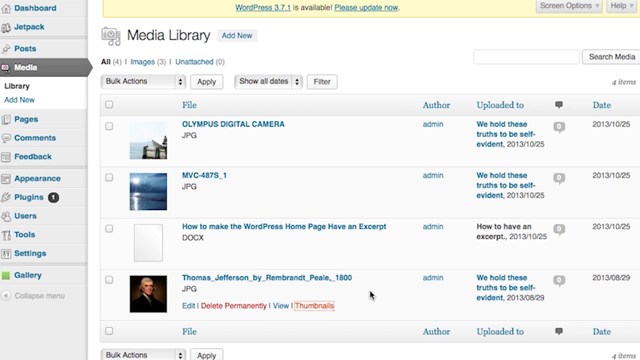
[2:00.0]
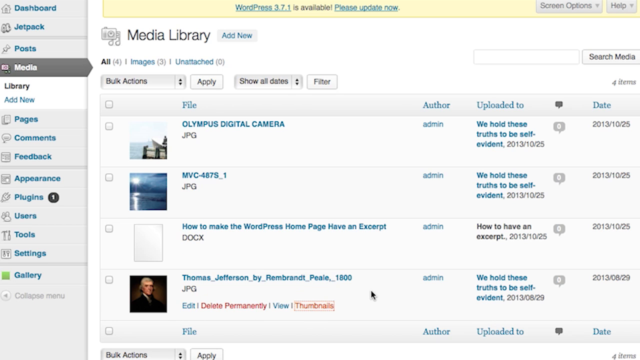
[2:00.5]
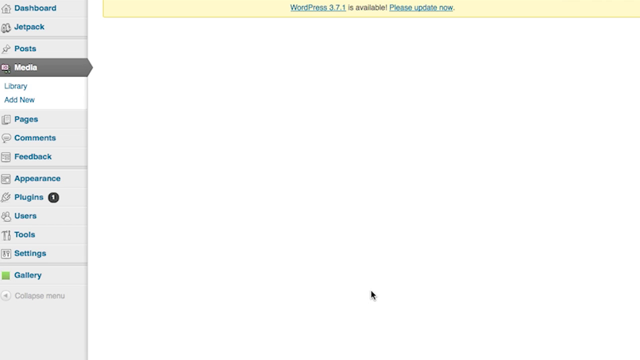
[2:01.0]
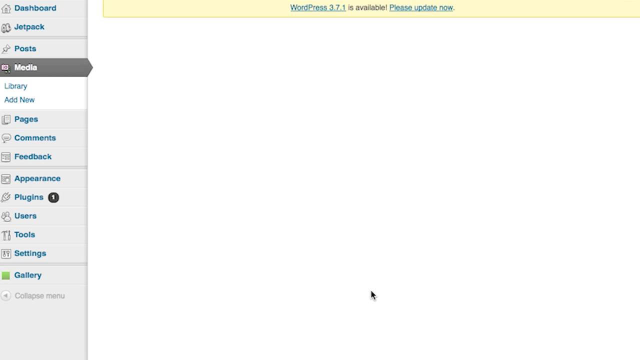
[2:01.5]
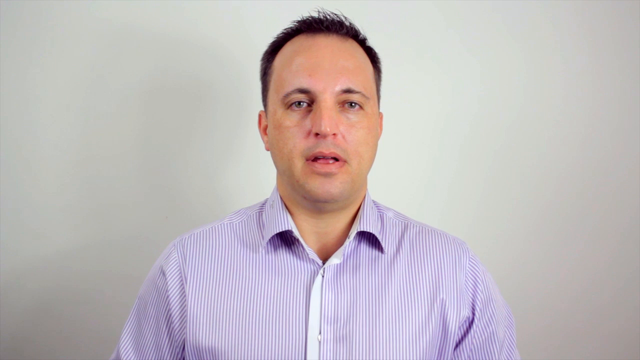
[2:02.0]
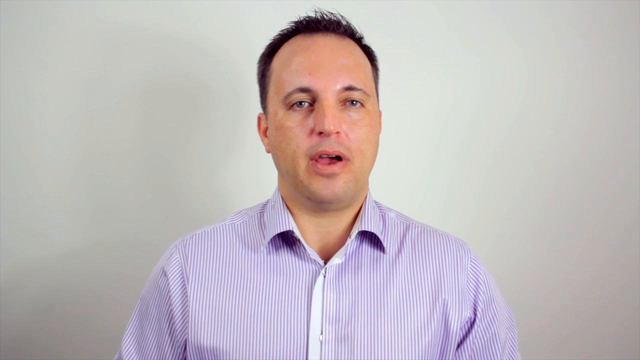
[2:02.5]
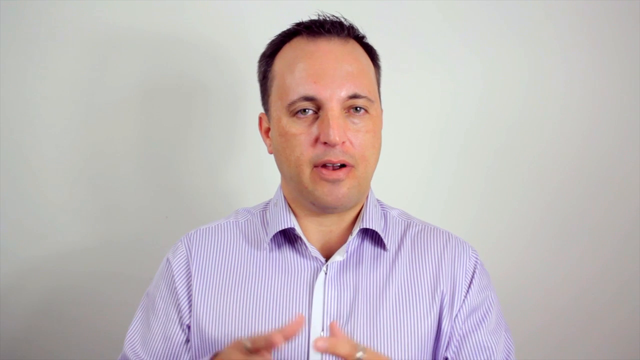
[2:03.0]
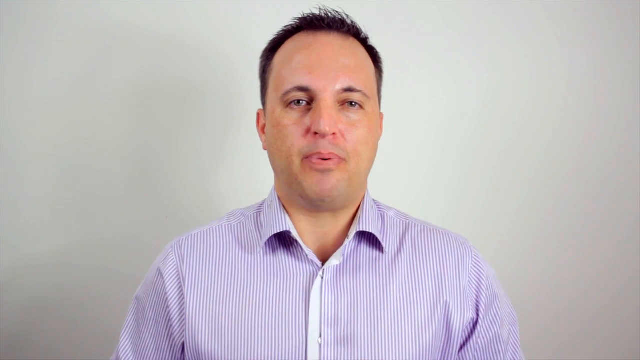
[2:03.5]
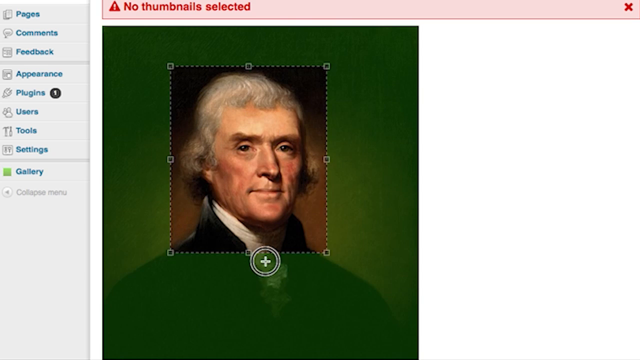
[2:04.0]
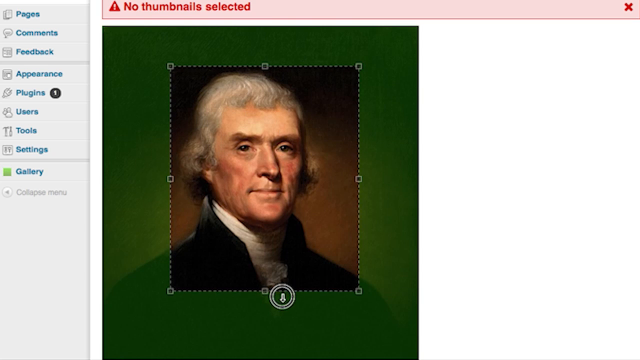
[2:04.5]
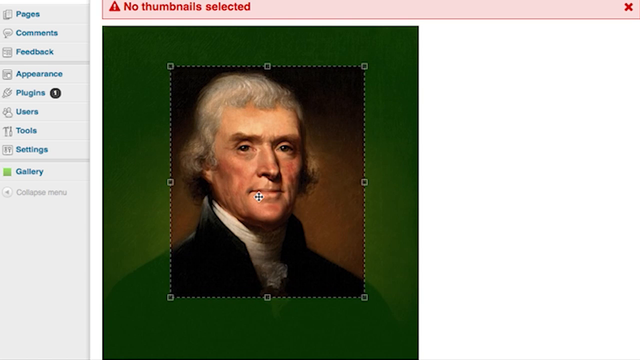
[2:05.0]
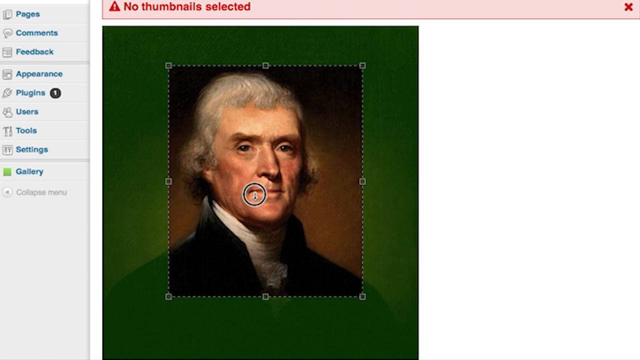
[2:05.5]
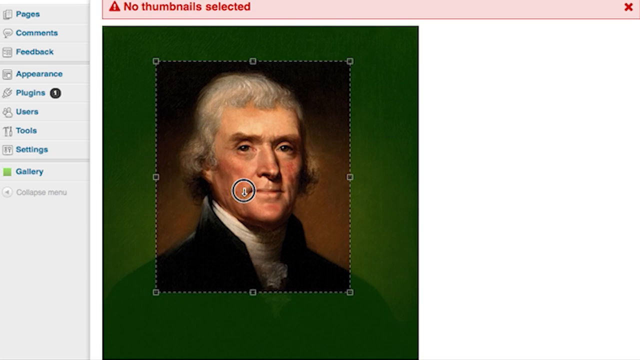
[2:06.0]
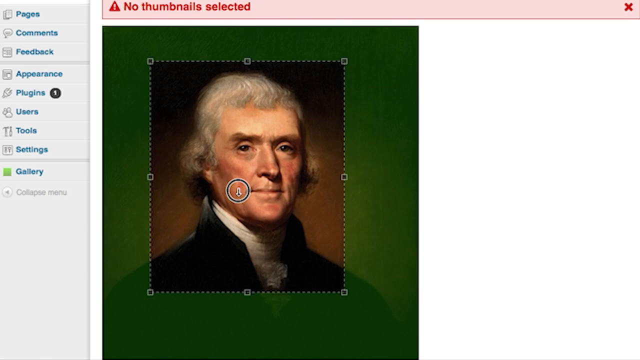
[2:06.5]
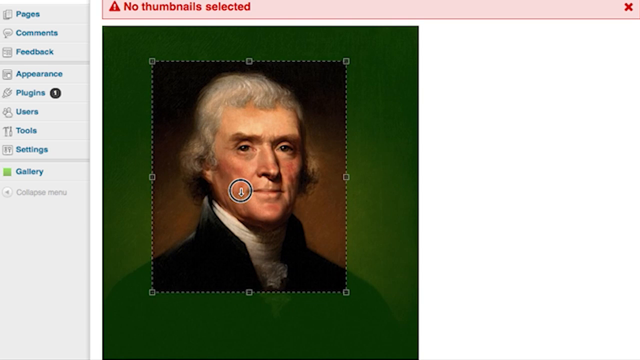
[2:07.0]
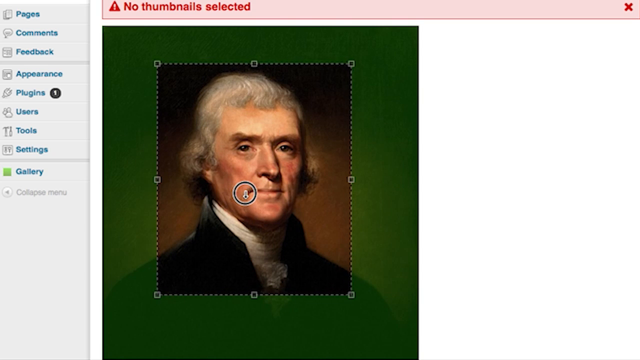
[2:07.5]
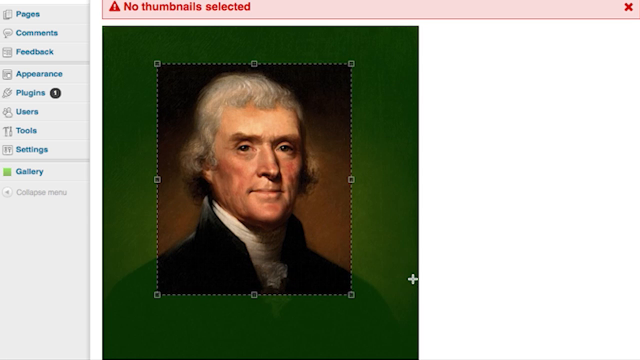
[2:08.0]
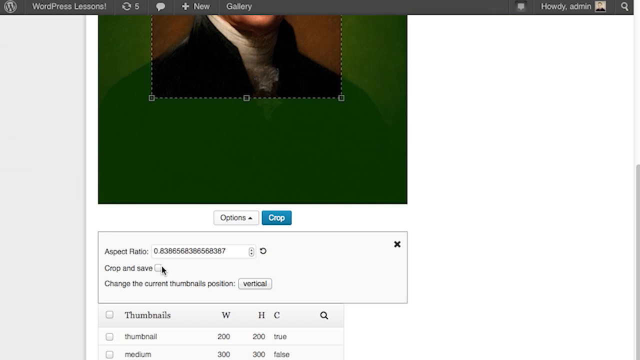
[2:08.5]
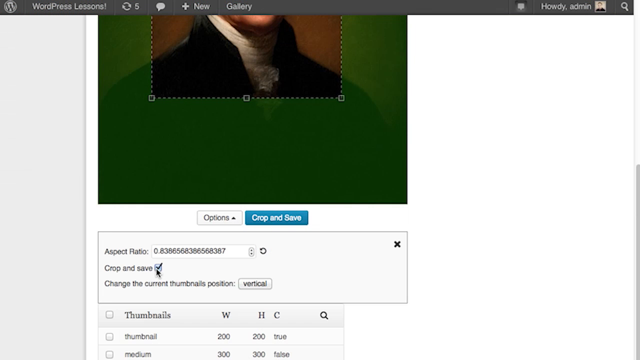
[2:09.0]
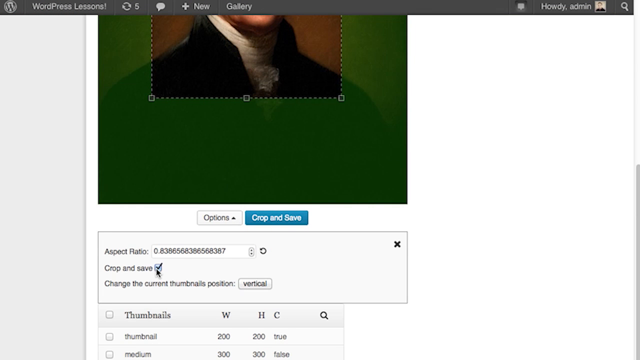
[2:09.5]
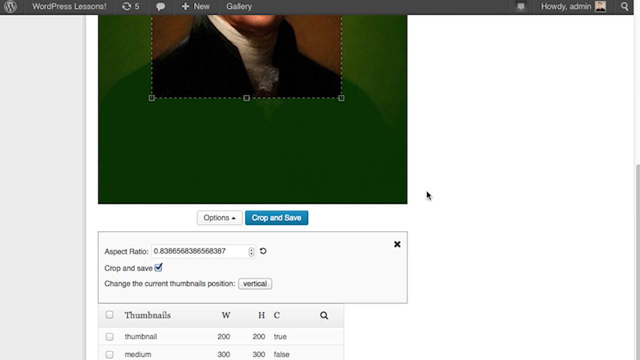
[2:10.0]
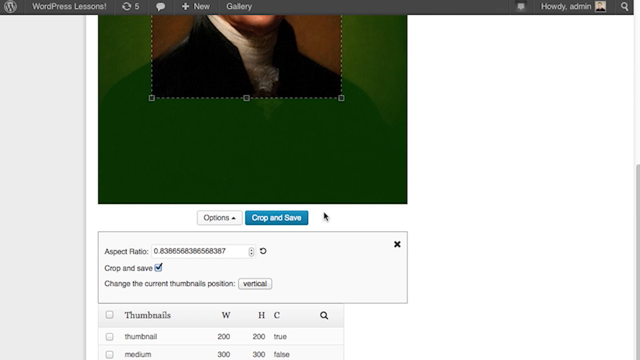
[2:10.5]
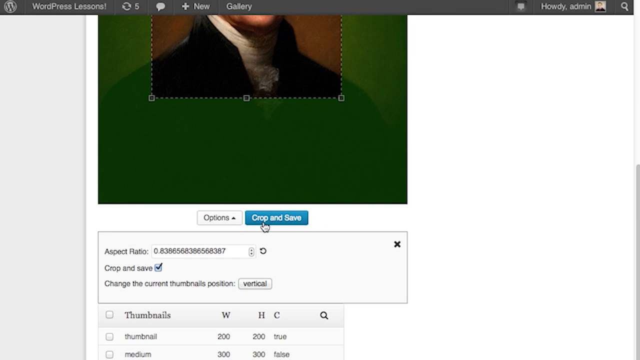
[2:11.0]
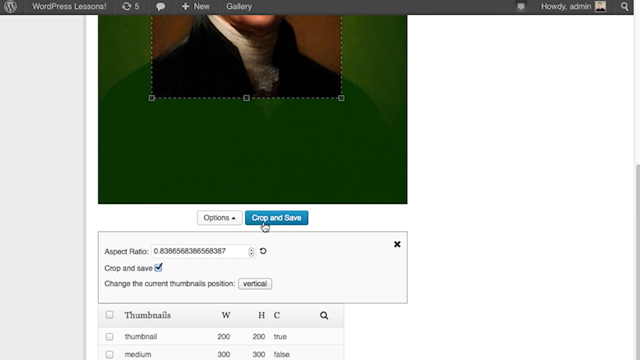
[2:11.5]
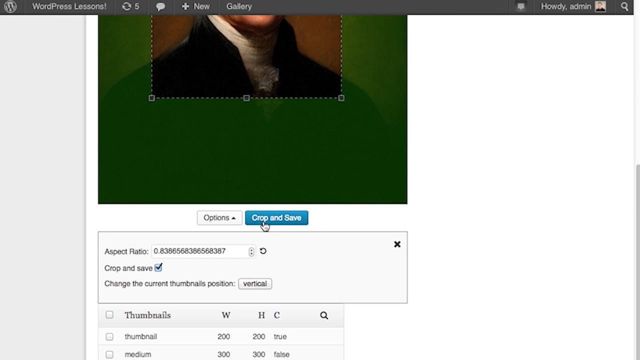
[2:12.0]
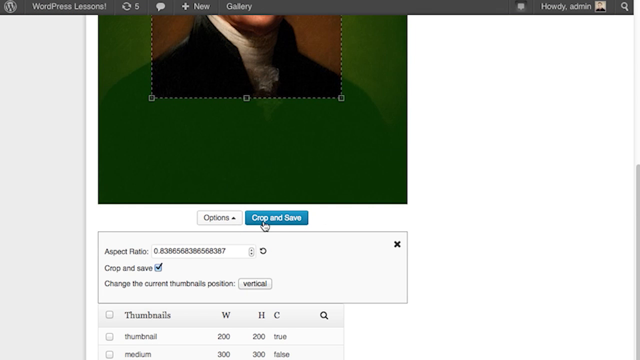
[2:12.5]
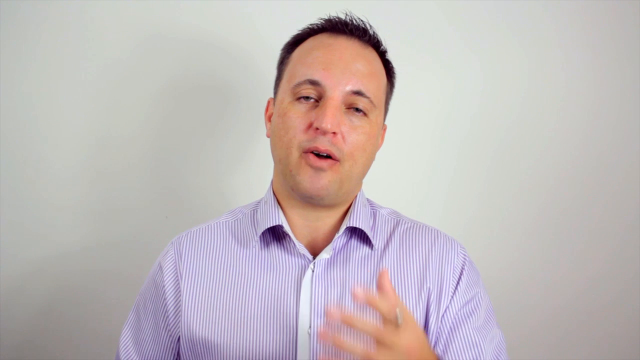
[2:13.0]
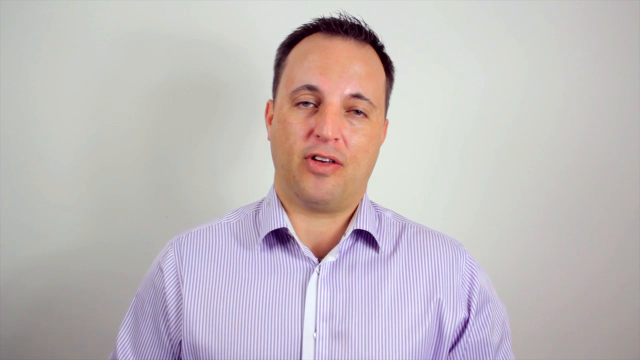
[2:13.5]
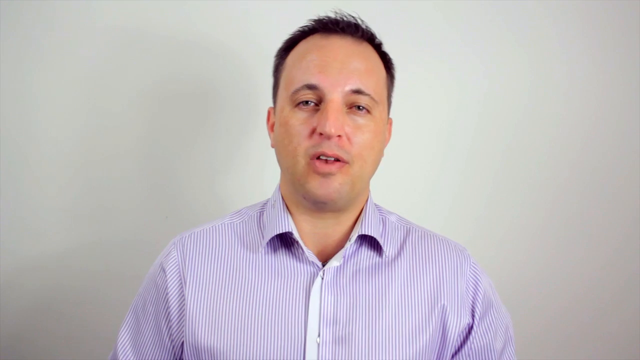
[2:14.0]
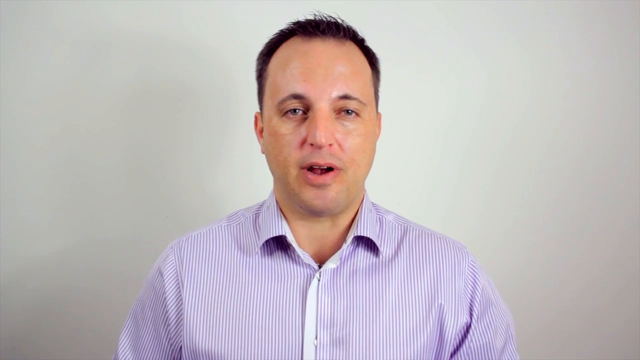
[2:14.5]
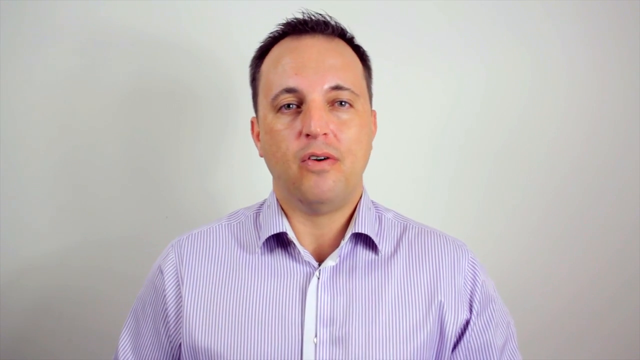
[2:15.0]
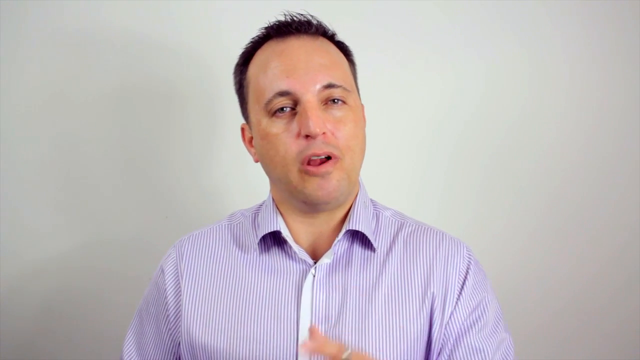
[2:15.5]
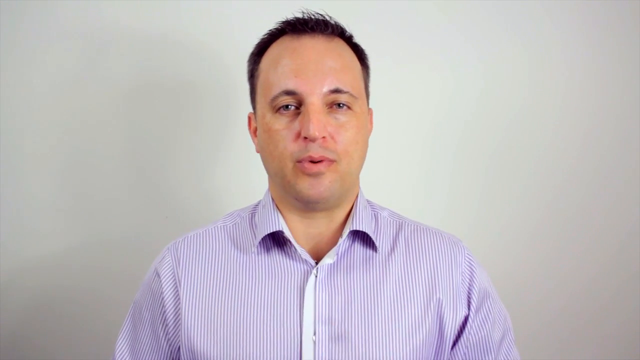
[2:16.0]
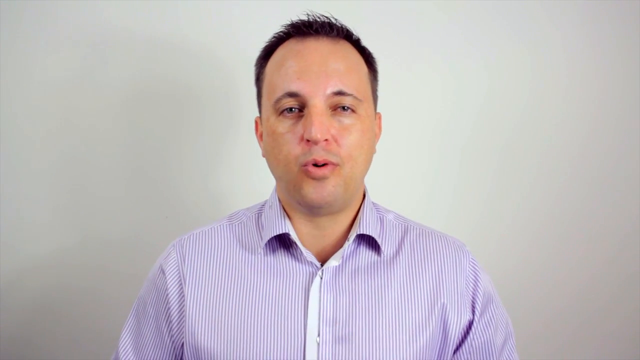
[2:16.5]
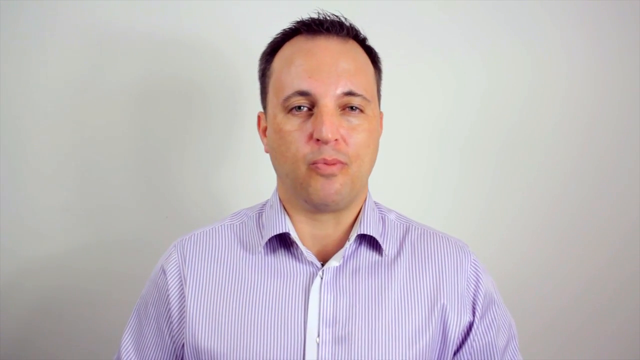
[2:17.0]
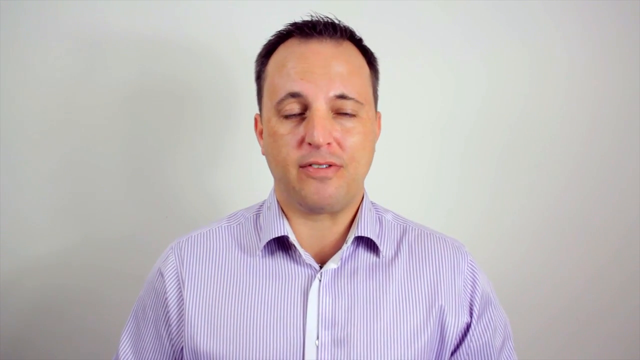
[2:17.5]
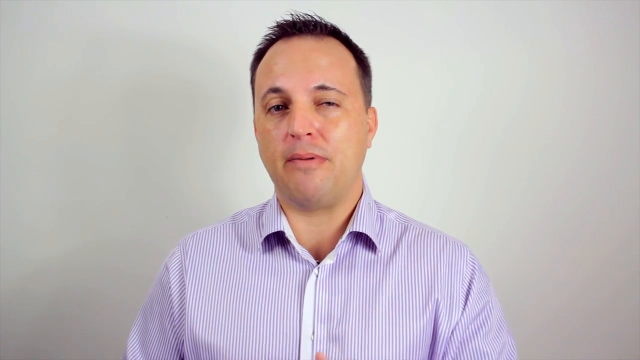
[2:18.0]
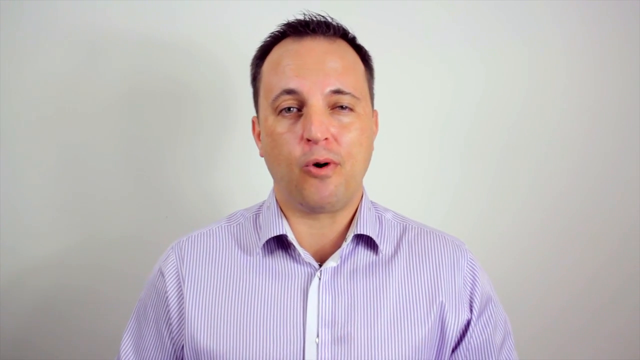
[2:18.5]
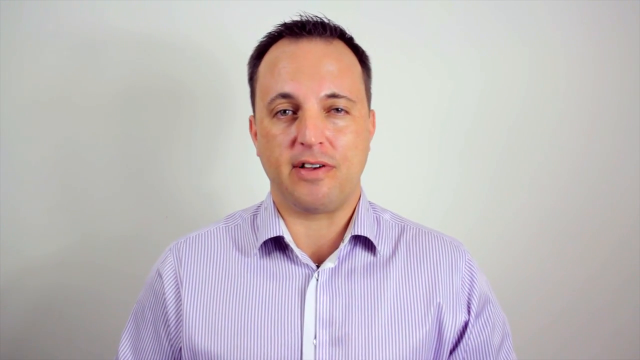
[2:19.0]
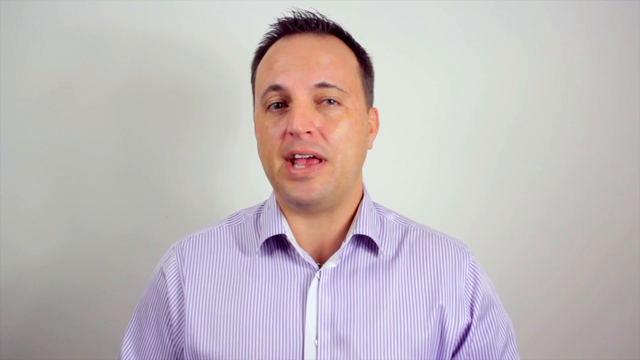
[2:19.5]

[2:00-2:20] The man talks to the camera and makes a small gesture, his hands briefly coming into the shot before moving down rapidly. A new screen reads "no thumbnail selected" at the top and shows a portrait image of a painting of some kind of person. The user draws a selection box around the person's head; the area outside the box is a green blur. He scrolls down the page to a highlighted option that says "crop and save", ticks a check mark, and clicks the blue "crop and save" button. Another shot shows him gesturing with his left hand and talking directly to the camera, then a new screen appears briefly before the video moves quickly back to him talking.